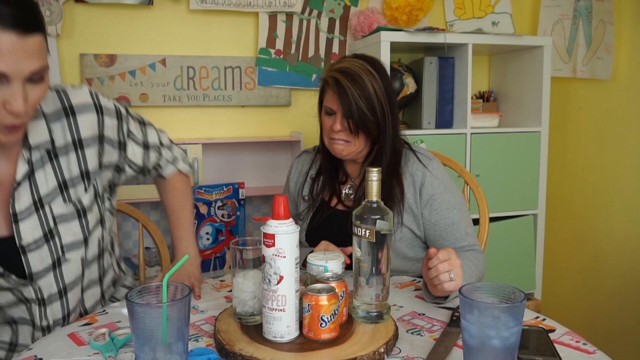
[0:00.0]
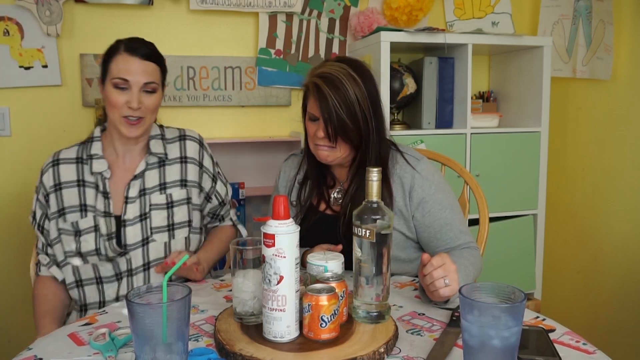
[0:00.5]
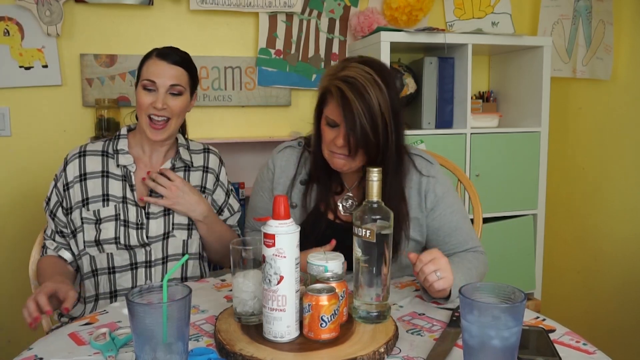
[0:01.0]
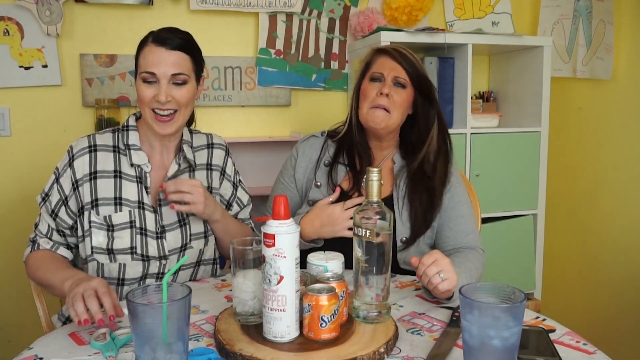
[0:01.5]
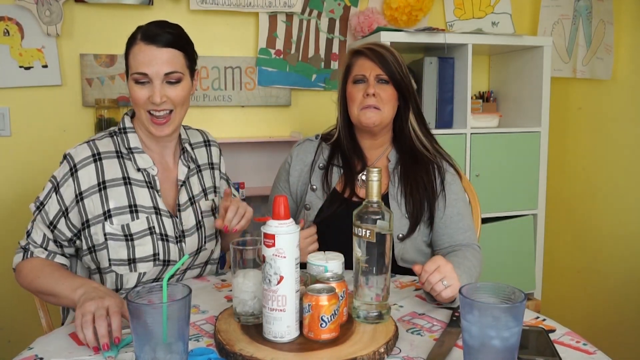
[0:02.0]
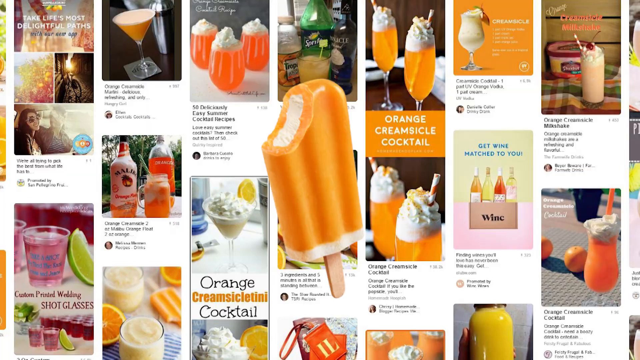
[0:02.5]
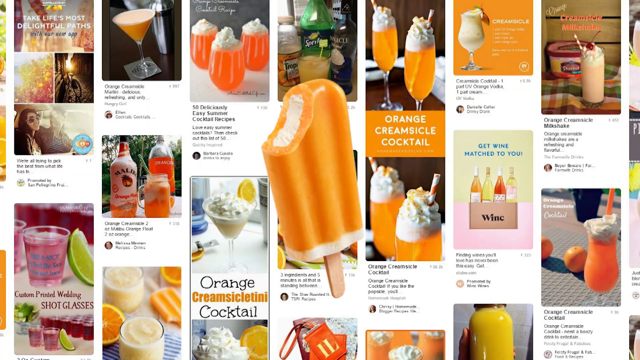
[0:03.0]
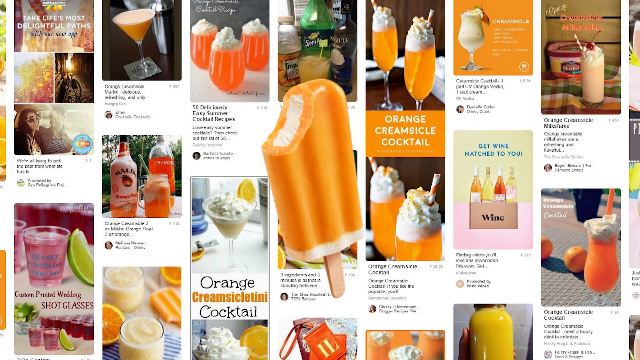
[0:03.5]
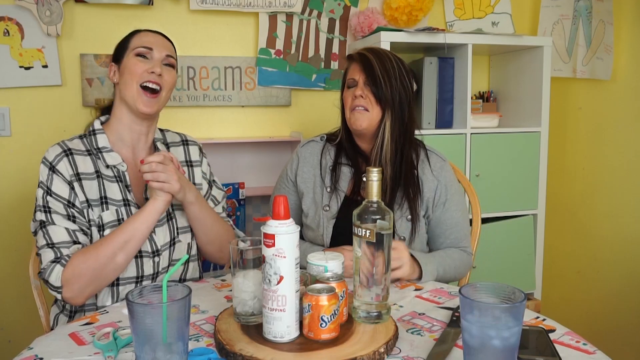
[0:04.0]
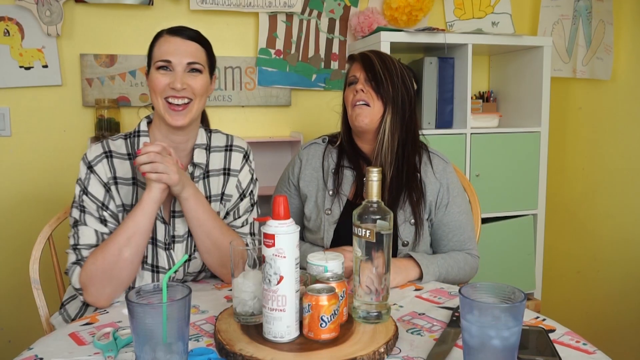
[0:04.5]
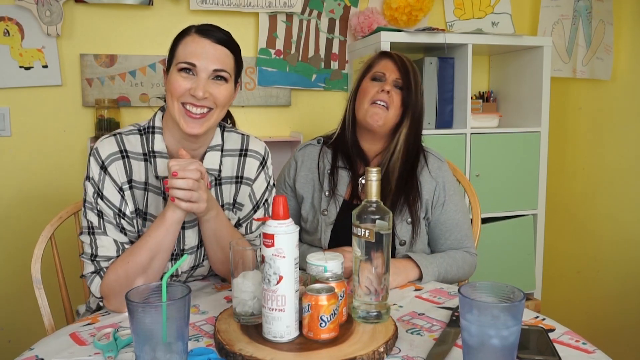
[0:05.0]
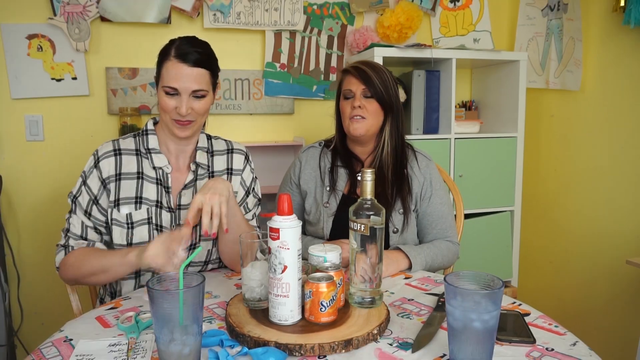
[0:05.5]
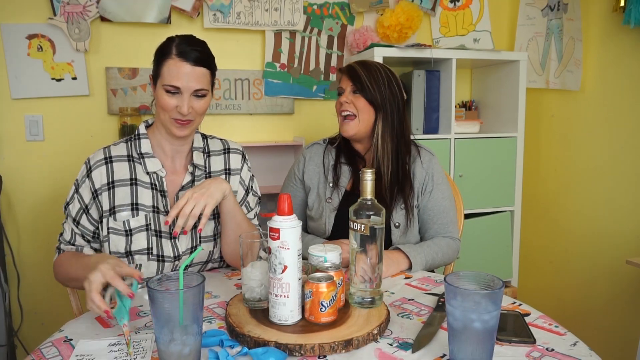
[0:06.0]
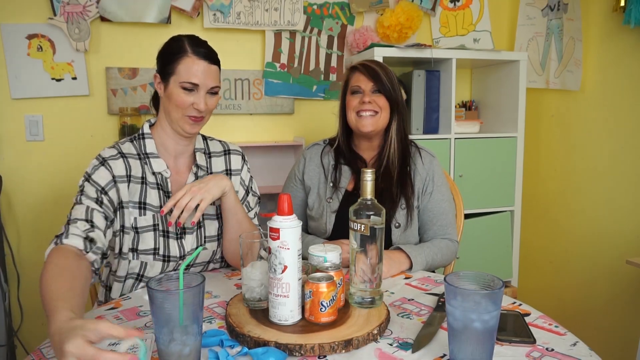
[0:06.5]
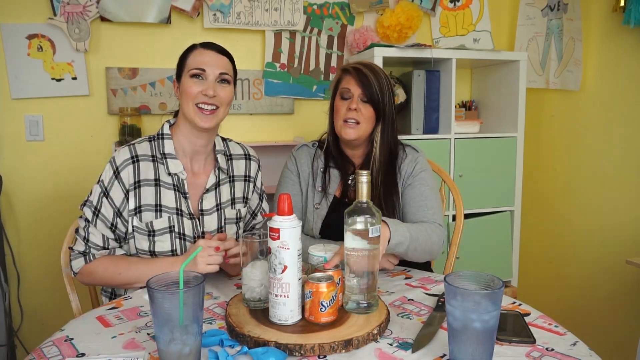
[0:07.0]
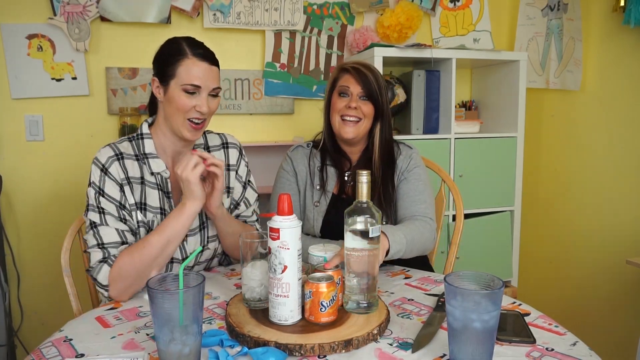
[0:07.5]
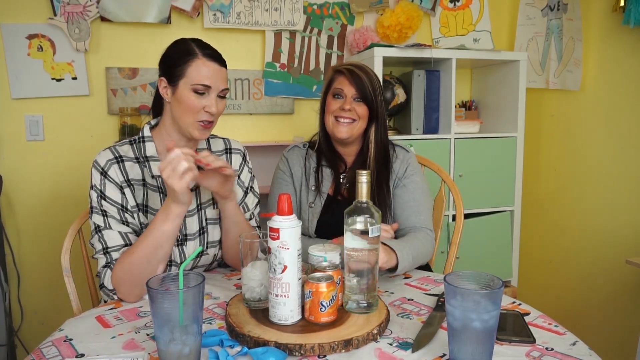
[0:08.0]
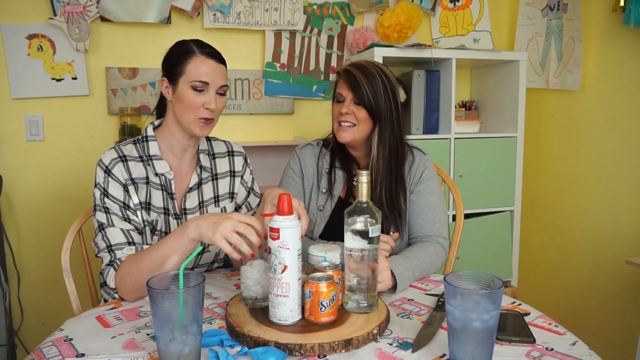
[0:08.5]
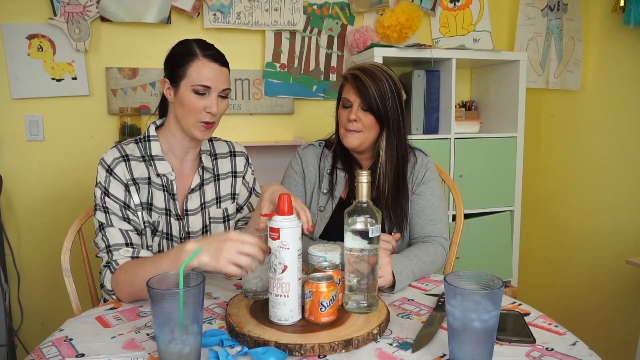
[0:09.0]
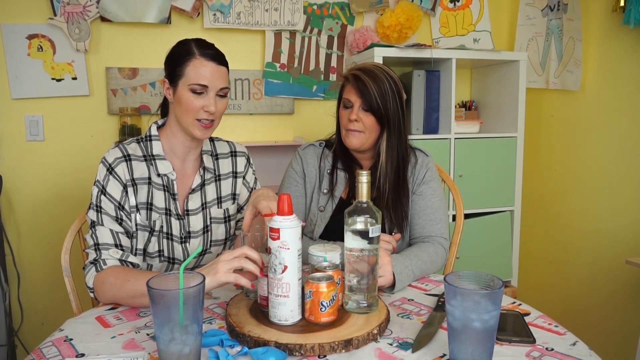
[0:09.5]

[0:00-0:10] Two women appear in the scene right away. The woman on the right wears a gray sweater and has long dark hair; the woman on the left wears a checkered shirt and seems to have her hair pulled back. Both appear to be sitting at a table covered with many items, including drinks such as soda and vodka. Both seem to be in a somewhat cheerful mood and appear as if they might be making different drinks, while the woman on the right appears somewhat nervous. Very quickly, the video shows an orange creamsicle cocktail that appears to have different ingredients and things users can click to make the drink, with other drinks in the background, as if it were a Google image result. Many drinks in many different colors appear in the background before the camera goes back to the women, showing things on the table such as whipped cream and a tablecloth.